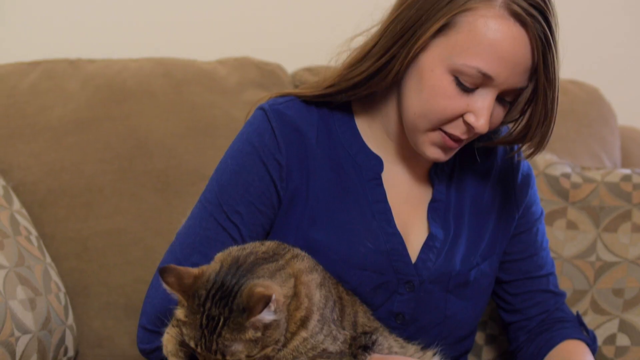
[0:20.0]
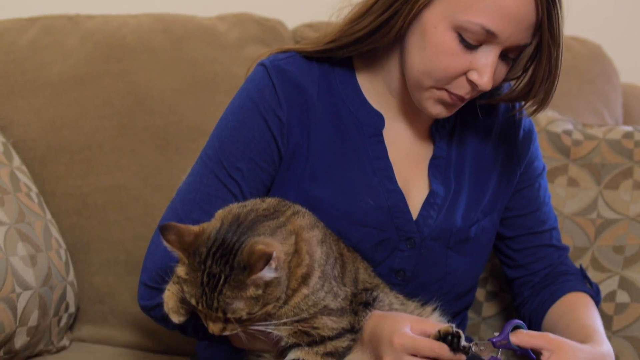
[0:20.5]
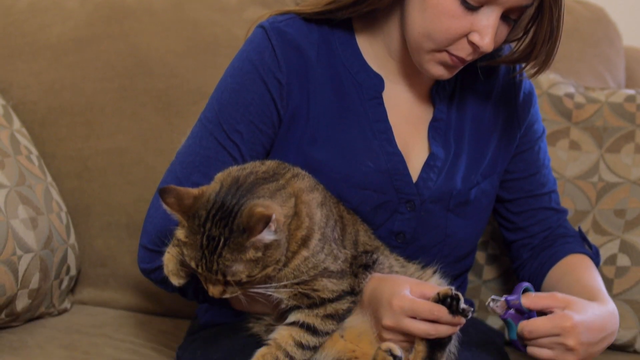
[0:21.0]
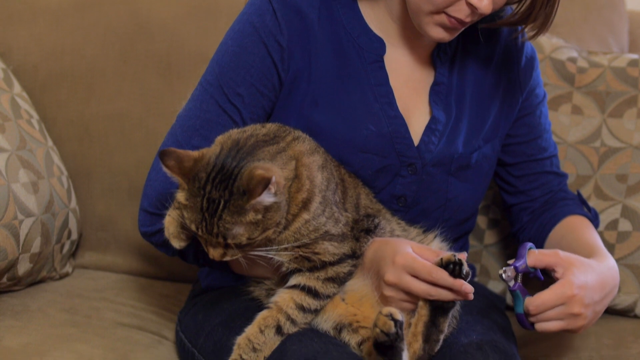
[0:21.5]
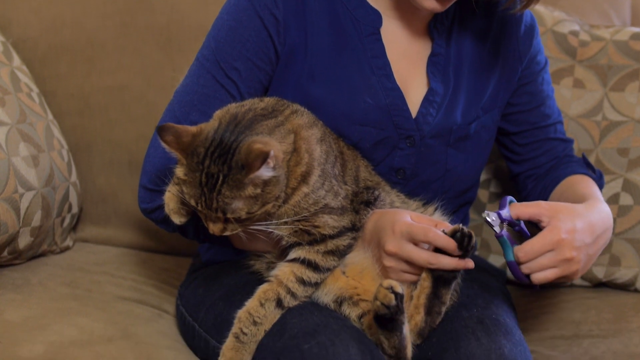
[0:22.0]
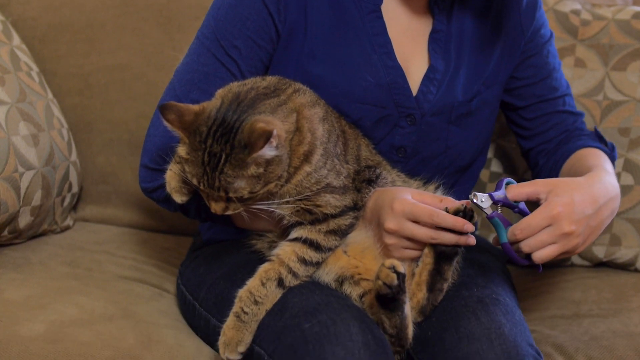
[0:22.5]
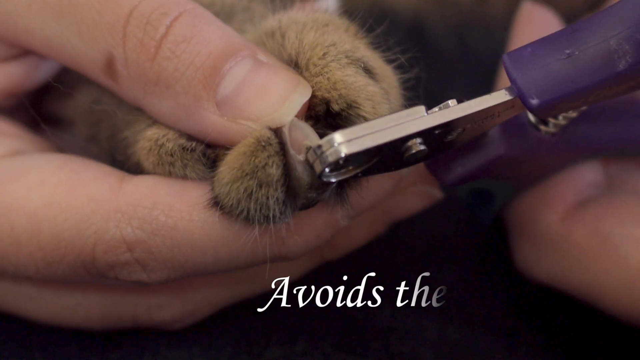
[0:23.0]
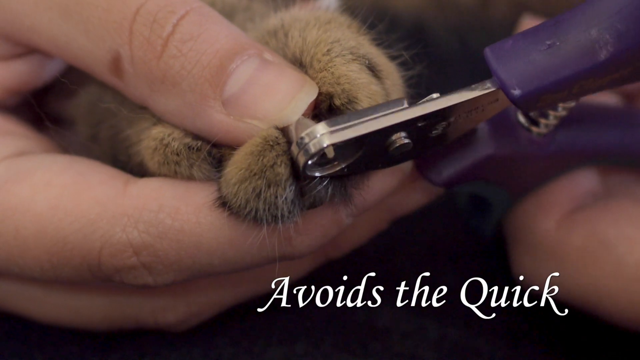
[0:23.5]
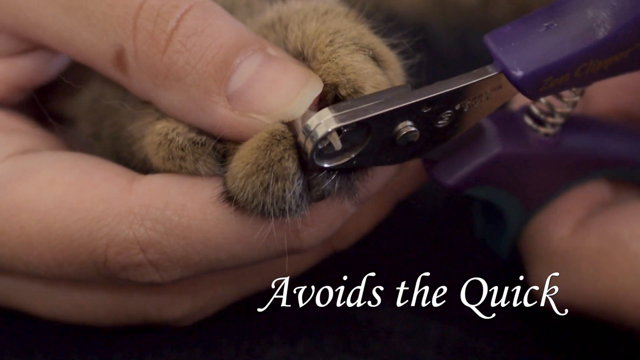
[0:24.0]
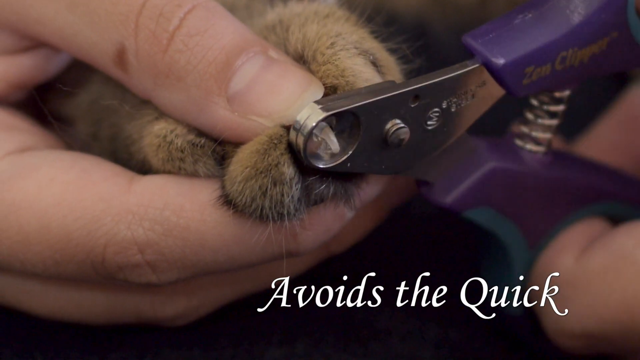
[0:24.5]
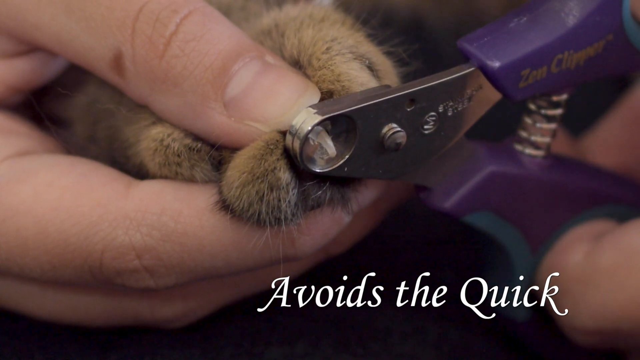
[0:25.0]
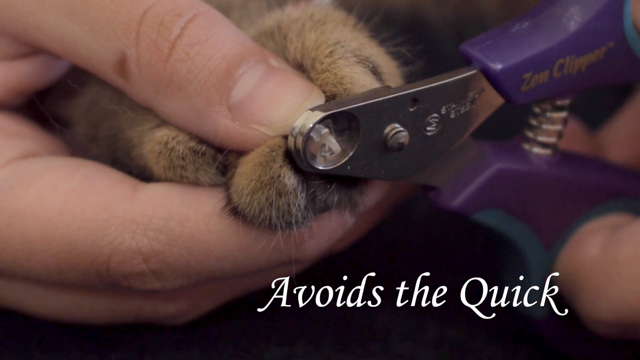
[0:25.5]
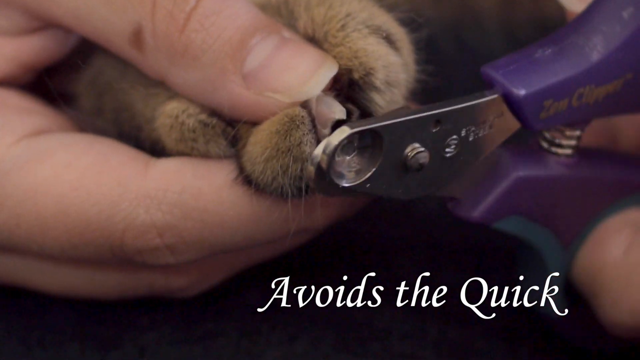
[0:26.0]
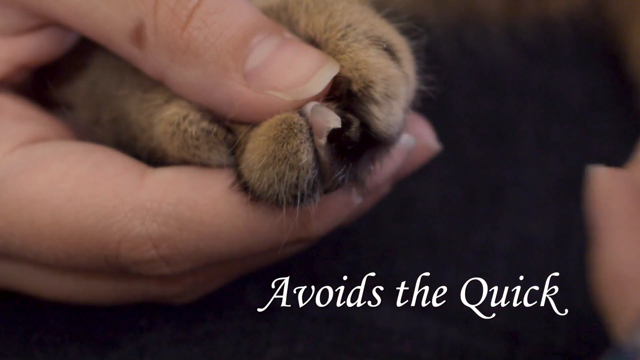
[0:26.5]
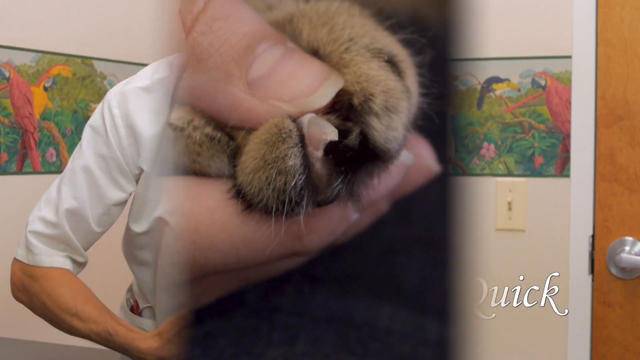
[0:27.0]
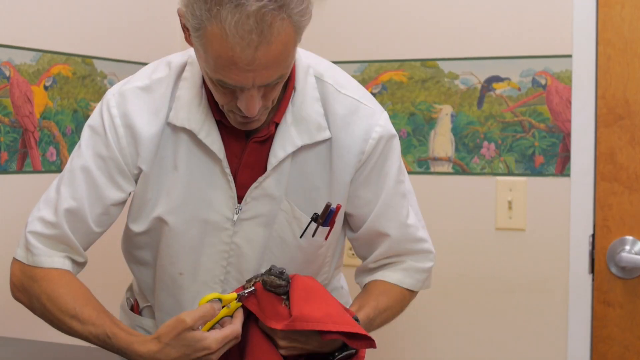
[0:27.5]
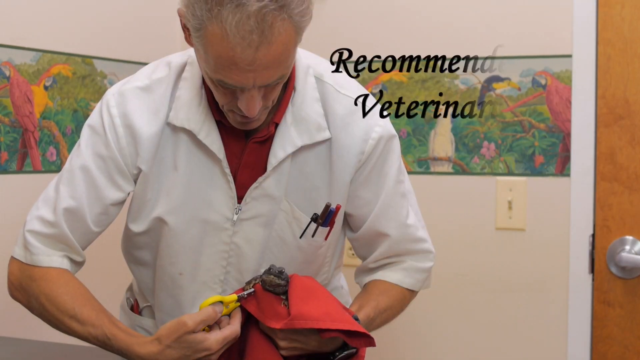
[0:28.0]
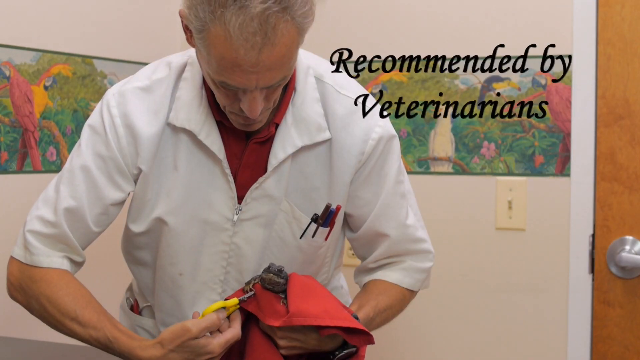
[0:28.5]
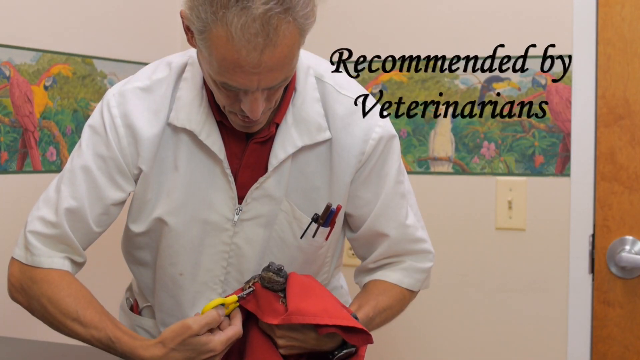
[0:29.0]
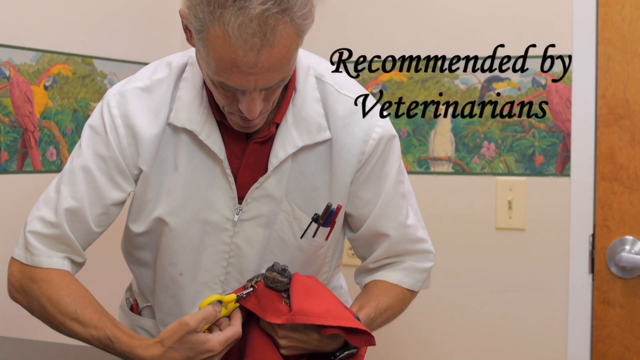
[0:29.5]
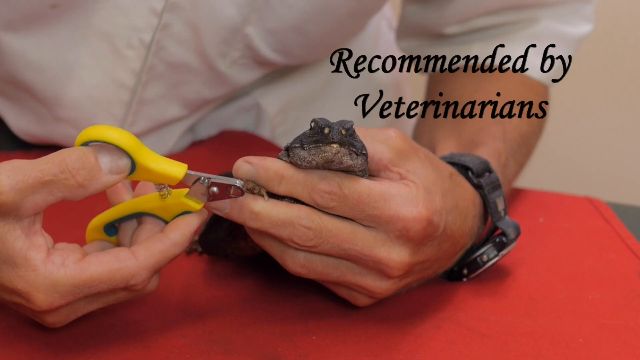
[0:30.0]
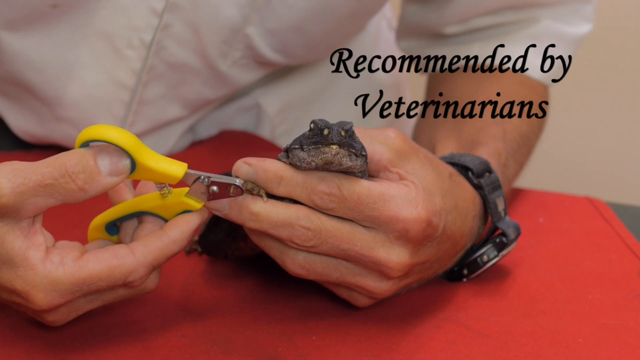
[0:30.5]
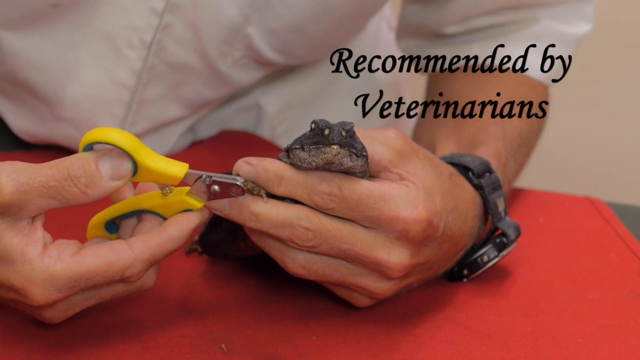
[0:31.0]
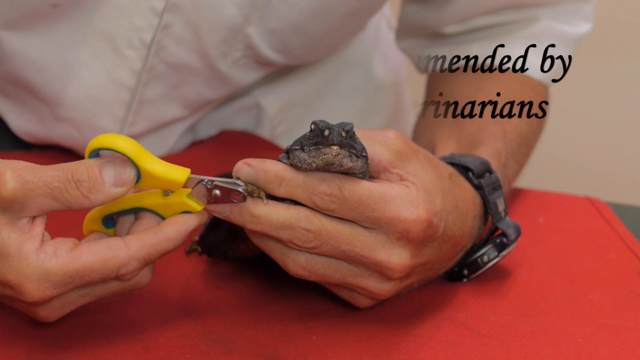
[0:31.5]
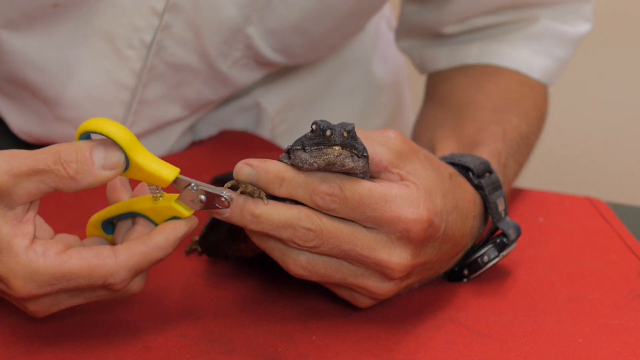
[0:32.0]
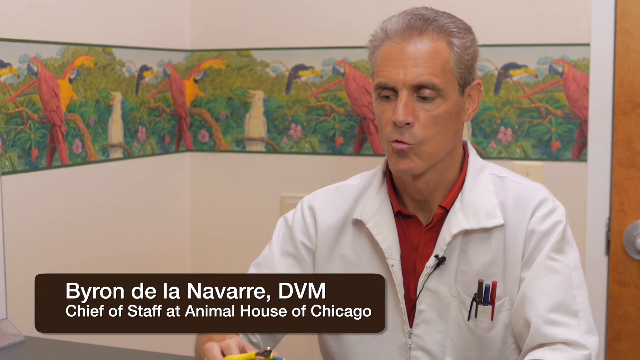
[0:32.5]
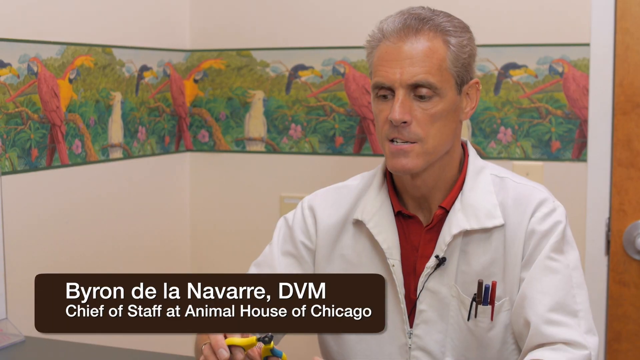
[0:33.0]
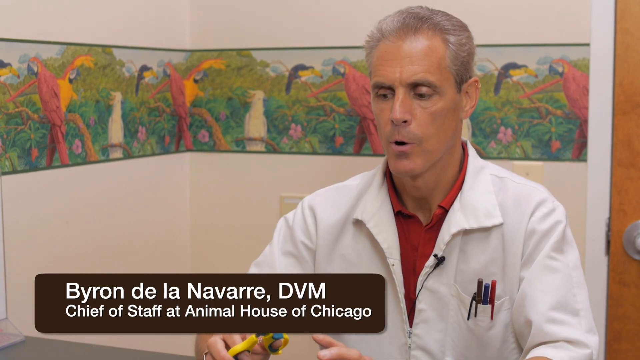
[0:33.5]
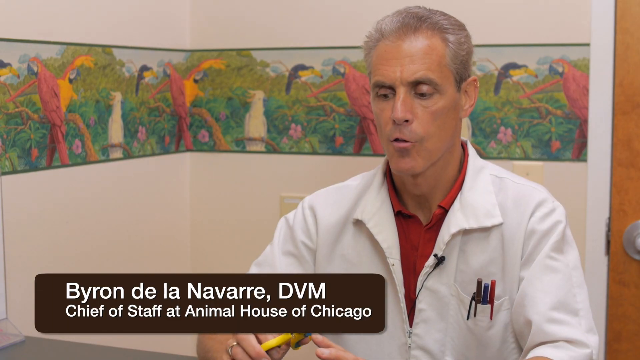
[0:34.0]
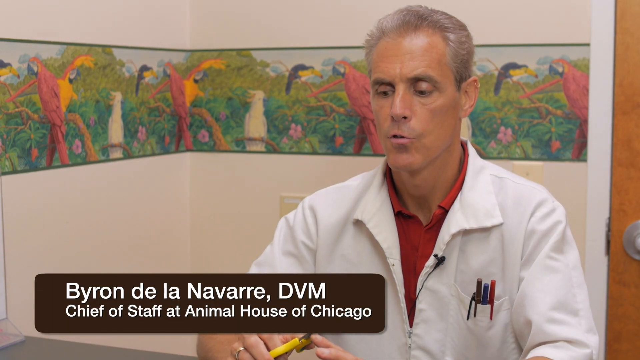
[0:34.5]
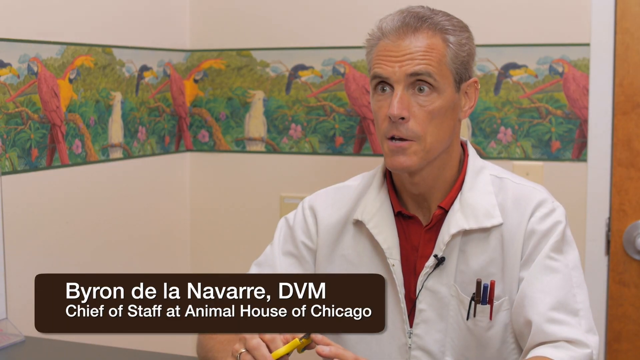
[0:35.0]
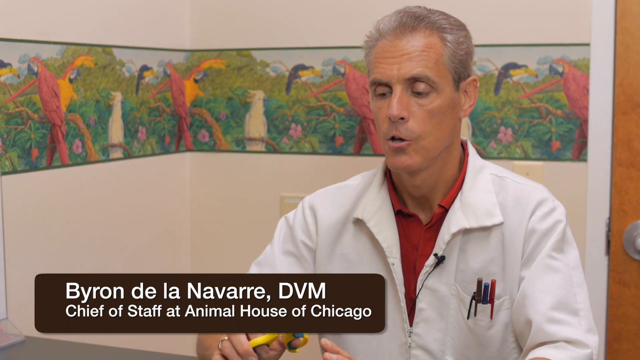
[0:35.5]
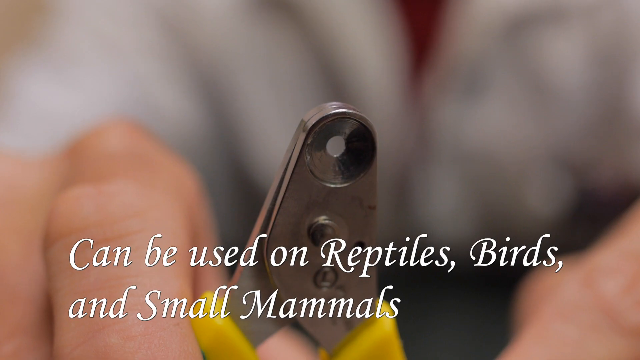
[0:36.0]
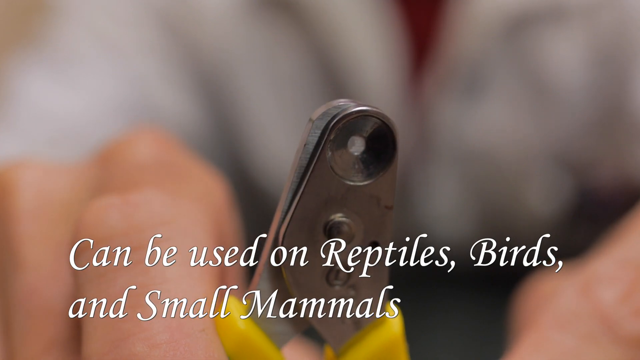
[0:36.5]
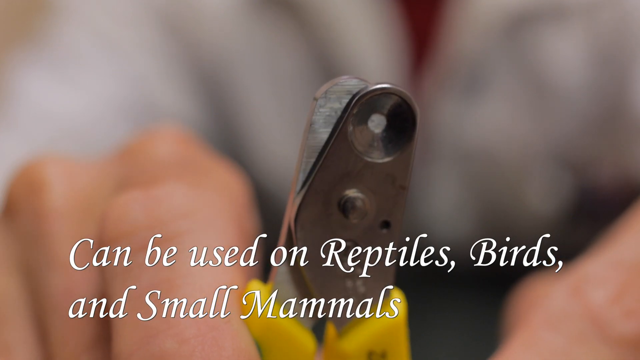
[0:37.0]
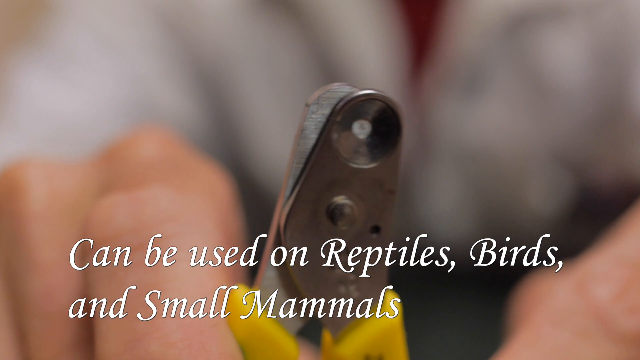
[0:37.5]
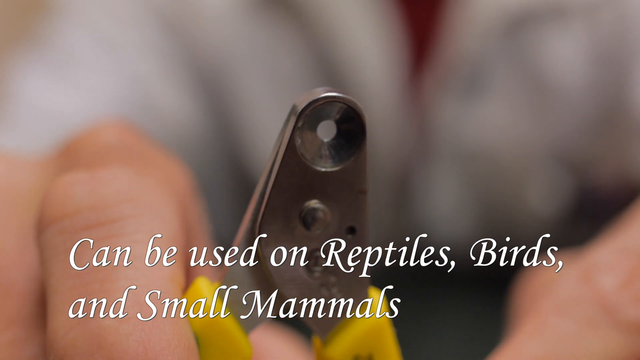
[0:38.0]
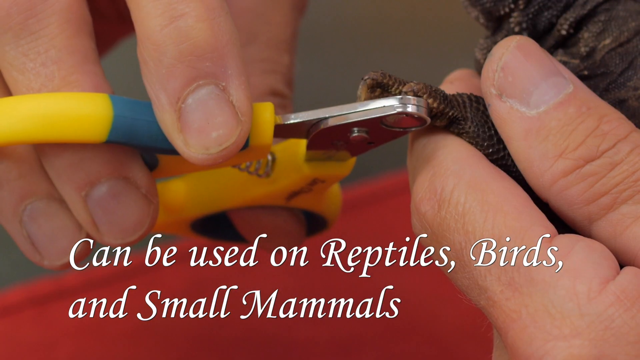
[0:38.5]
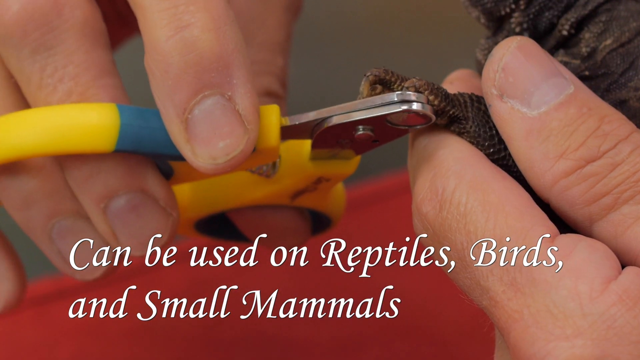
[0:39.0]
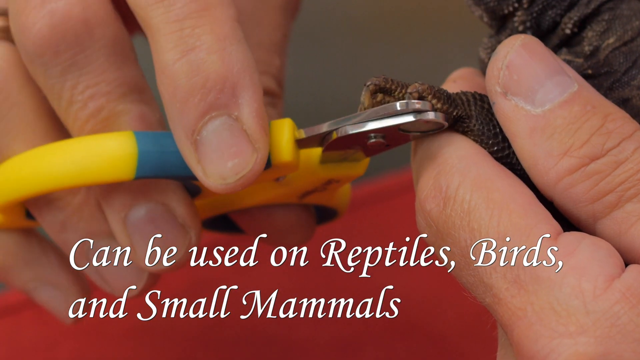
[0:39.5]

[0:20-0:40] A woman sits on a sofa with two pillows beside her. She has black hair and wears black pants and a blue long-sleeved shirt, and she holds a cat across her hand. In her right hand she holds a clipper, and with her left hand she holds one of the cat's paws. With a little smile, she carefully cuts the cat's nails. The cat has black and brown striped fur and really long nails. Another scene shows a doctor in a white coat cutting the nails of a small animal. There are artistic designs on the wall, and the doctor has blue, red and black pens in his breast pocket. He can be seen explaining to someone on the other end of the video. The woman cuts with blue clippers, while the man apparently uses yellow clippers. The nails are cut neatly.